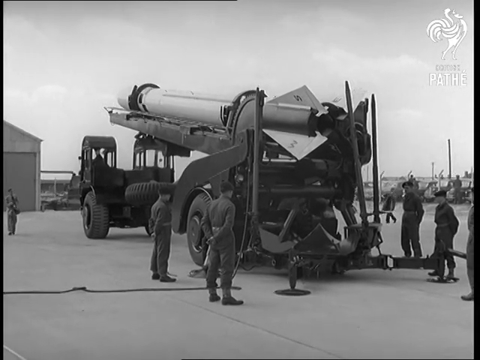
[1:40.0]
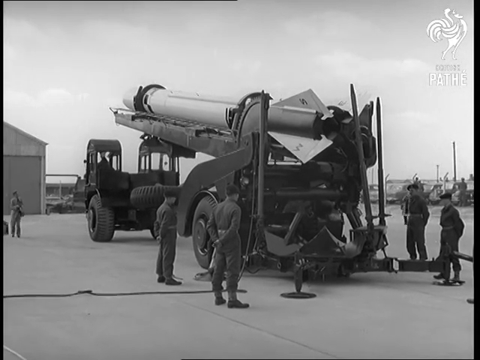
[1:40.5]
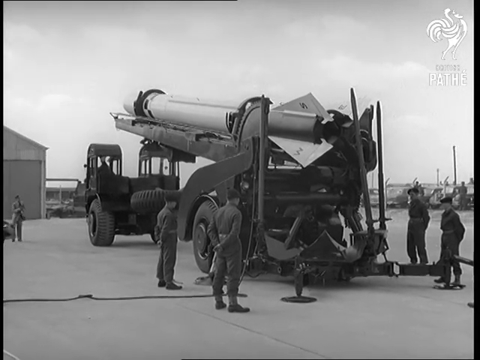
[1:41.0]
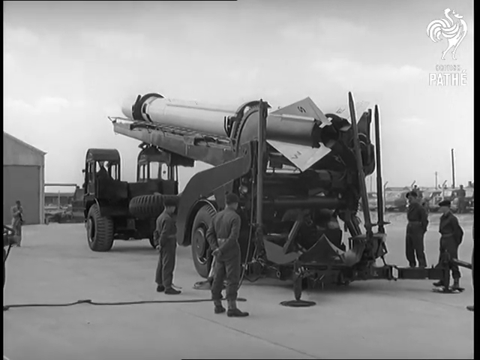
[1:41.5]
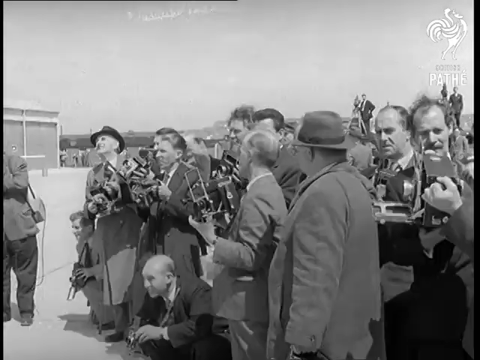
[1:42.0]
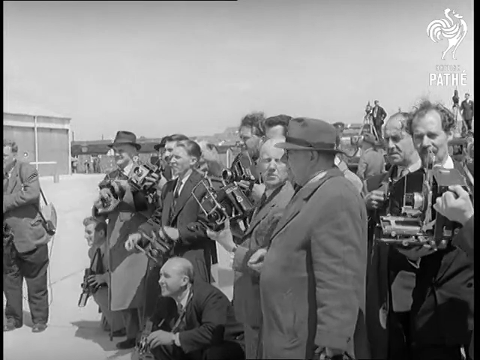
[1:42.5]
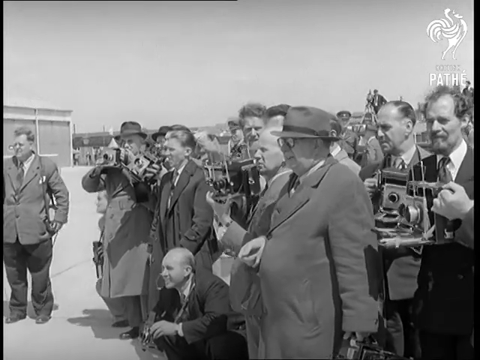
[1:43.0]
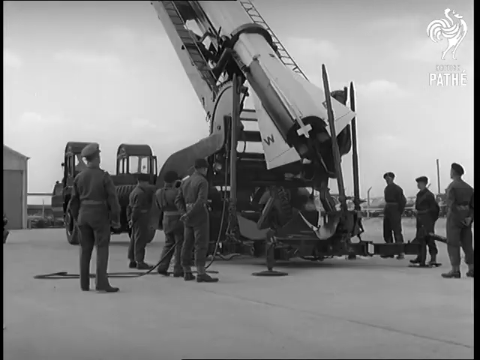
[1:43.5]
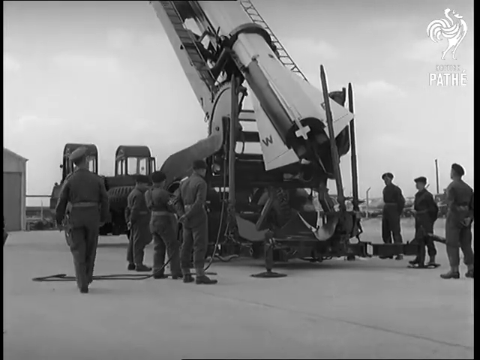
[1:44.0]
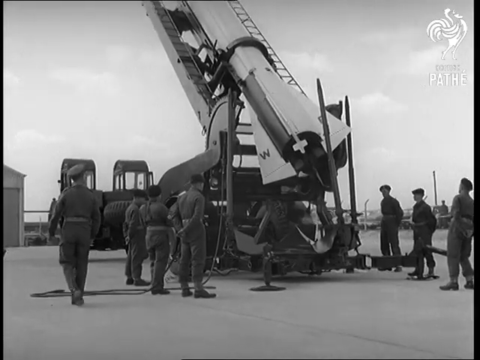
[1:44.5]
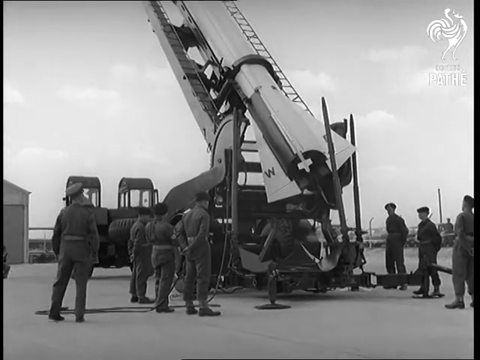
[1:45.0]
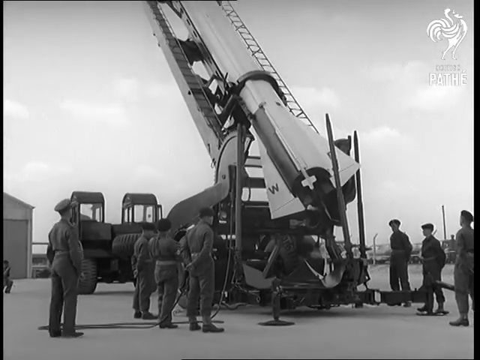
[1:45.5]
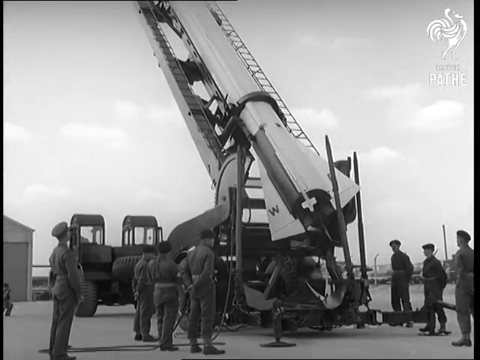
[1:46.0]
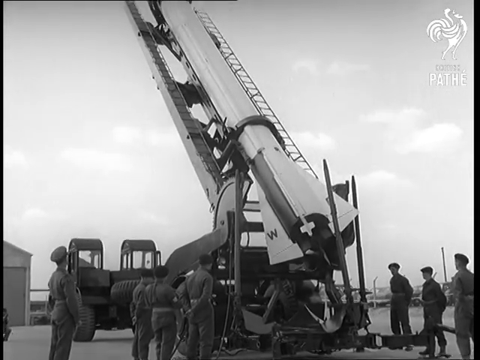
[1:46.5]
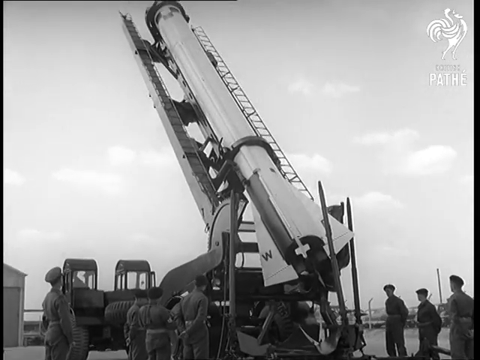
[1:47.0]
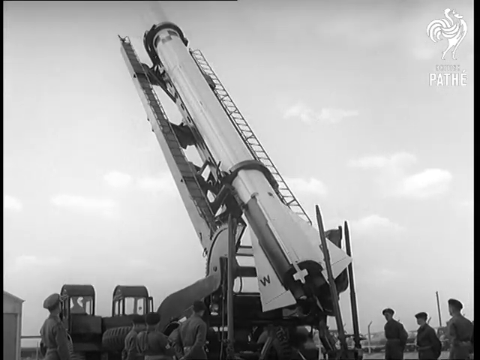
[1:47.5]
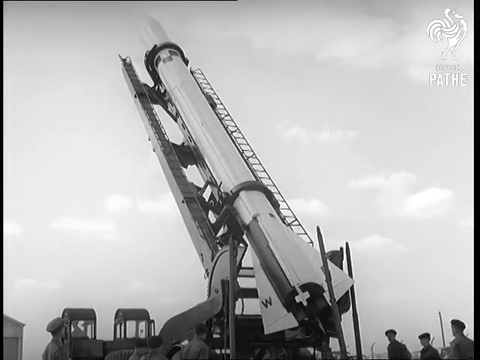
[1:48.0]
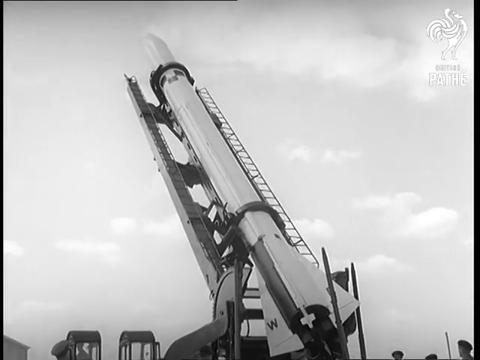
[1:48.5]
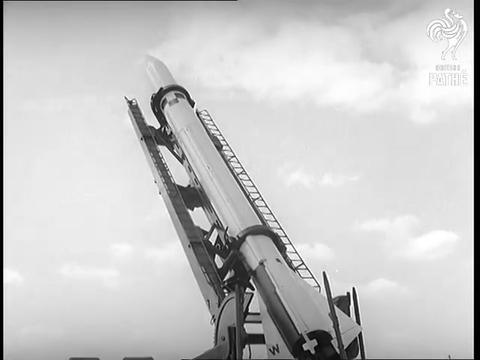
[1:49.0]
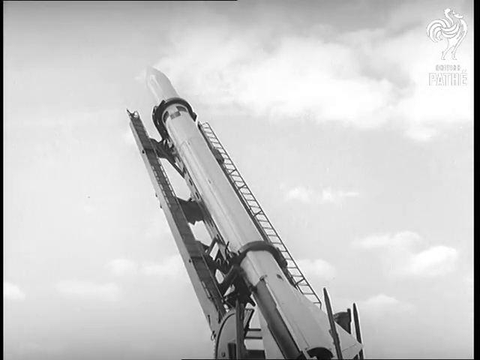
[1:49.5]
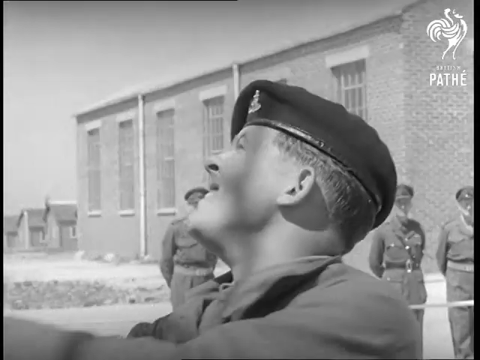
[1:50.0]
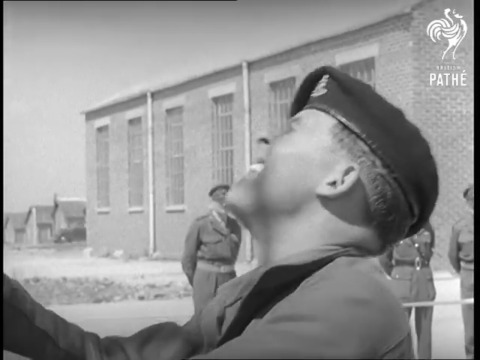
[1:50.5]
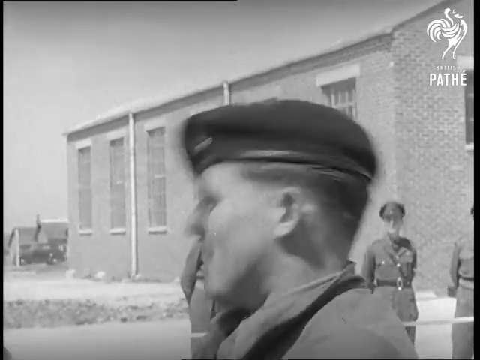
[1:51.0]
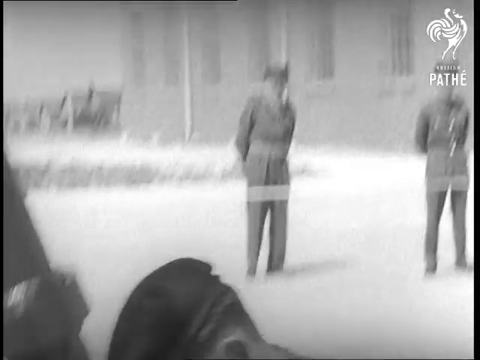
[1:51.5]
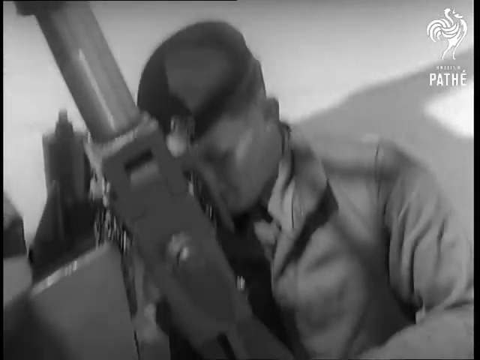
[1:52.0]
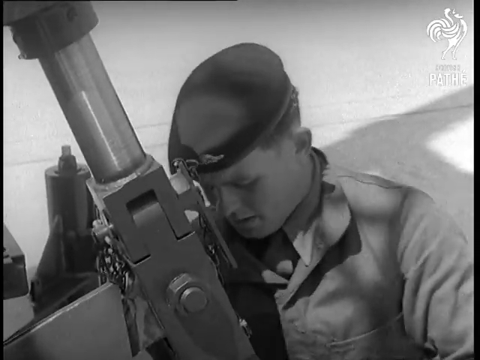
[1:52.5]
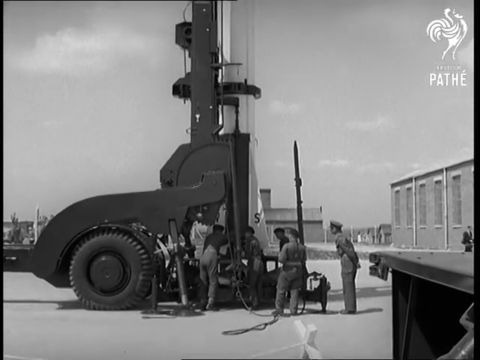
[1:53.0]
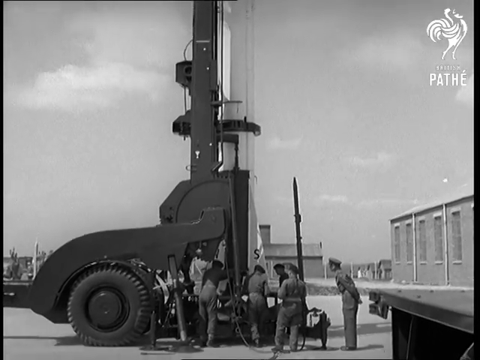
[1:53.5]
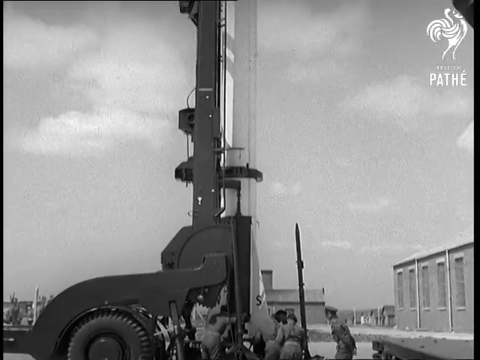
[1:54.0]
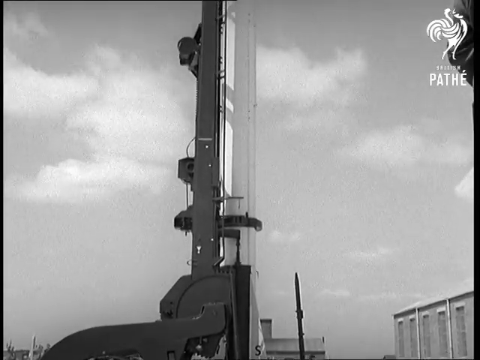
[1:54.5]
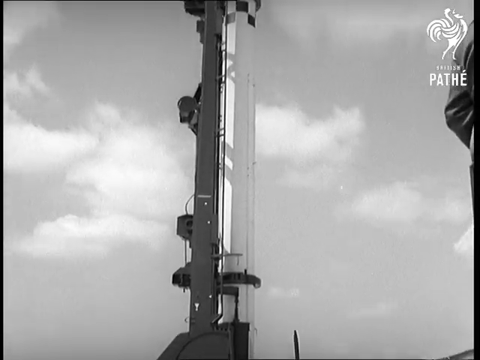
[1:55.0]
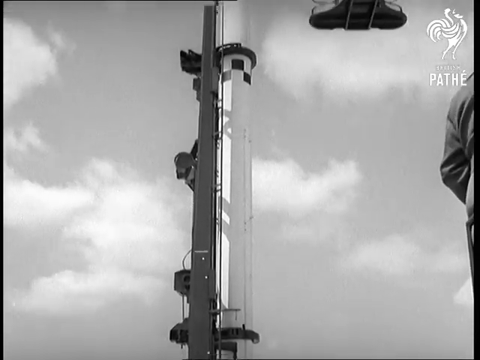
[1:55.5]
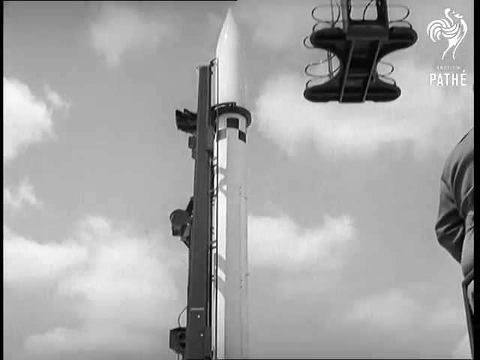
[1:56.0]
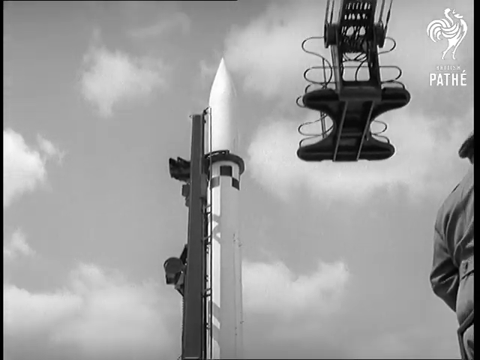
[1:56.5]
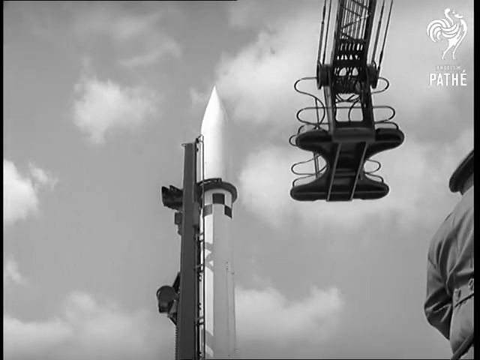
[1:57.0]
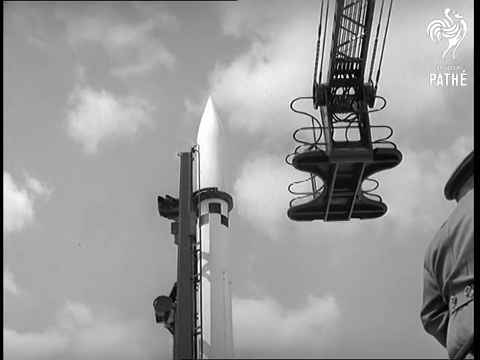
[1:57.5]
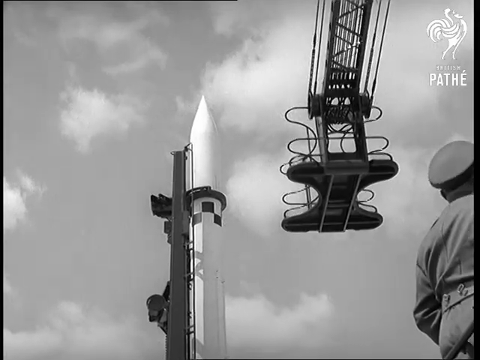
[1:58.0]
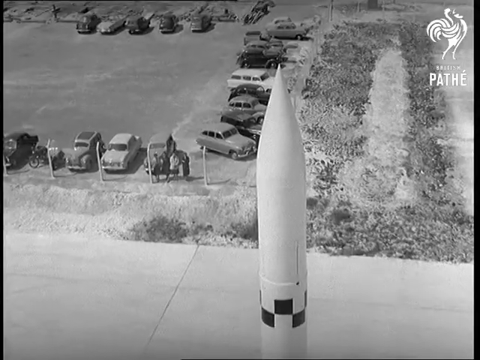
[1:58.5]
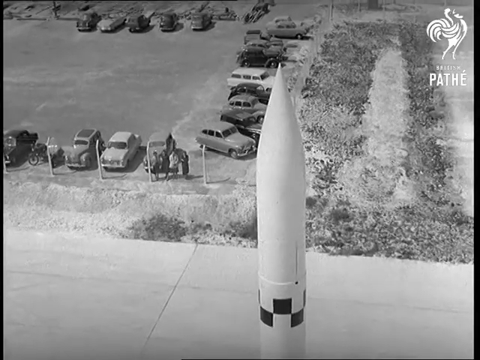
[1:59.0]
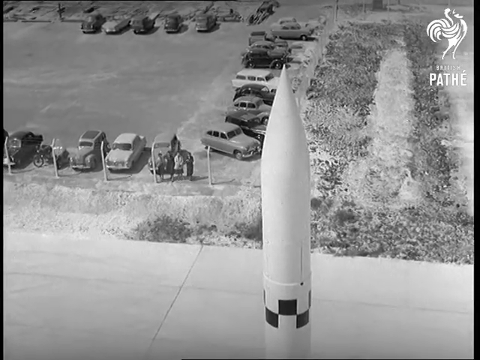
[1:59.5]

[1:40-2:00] The flatbed of the truck rises at an angle, lifting a long tubular rocket ship into a vertical position. At least six men in military garb, reminiscent of British soldiers, stand near the truck as it lifts the rocket ship into place. The camera pans up along the side of the white rocket ship to its pointy top. Some of the military men on the ground stare up at the rocket ship. One soldier wearing a beret squats down to adjust something, a connector to a lever. The rocket ship is then fully vertical, and a crane overhead has an empty carriage.